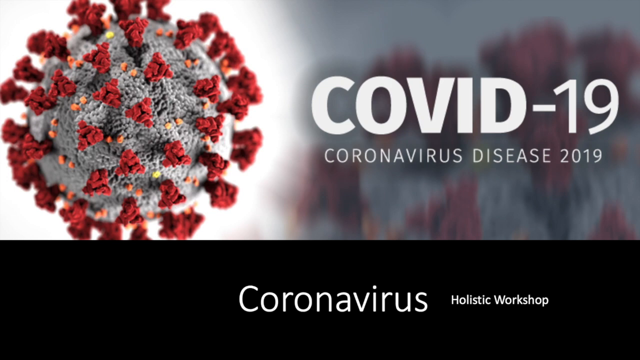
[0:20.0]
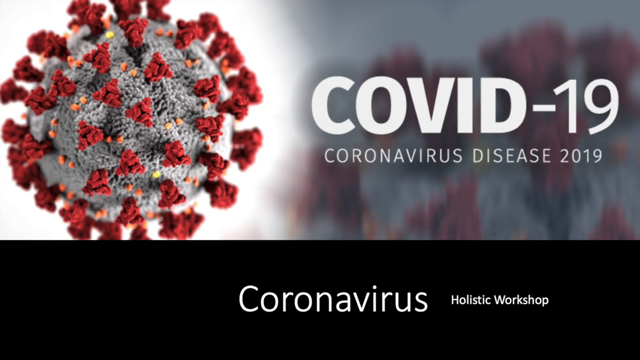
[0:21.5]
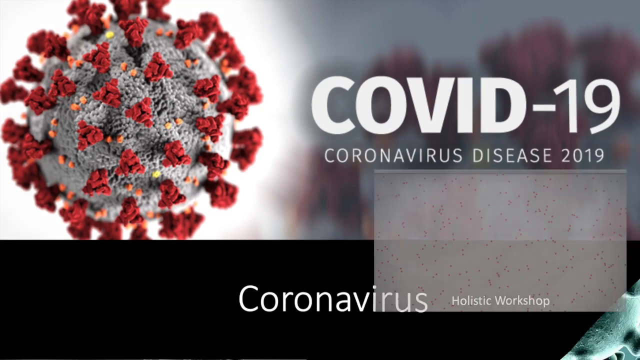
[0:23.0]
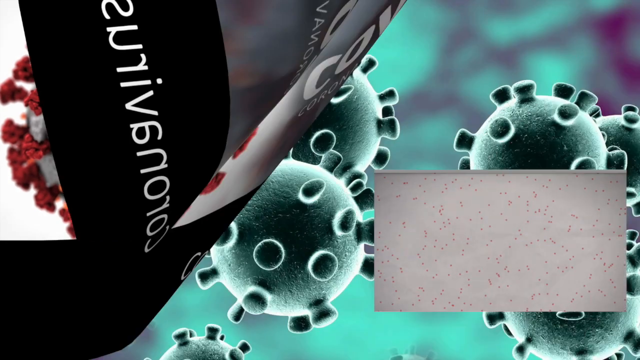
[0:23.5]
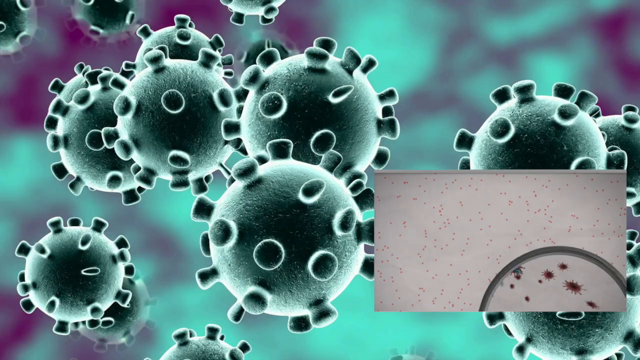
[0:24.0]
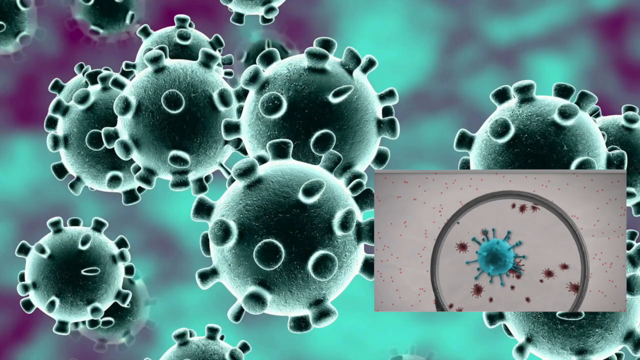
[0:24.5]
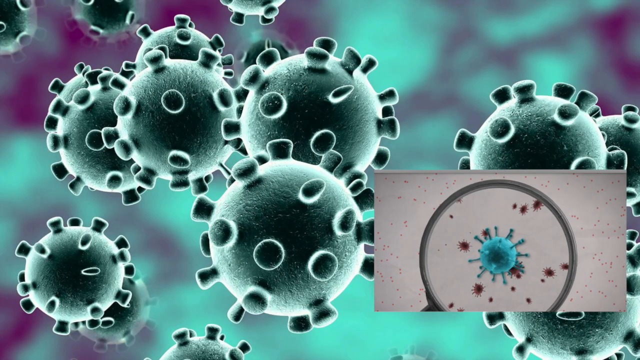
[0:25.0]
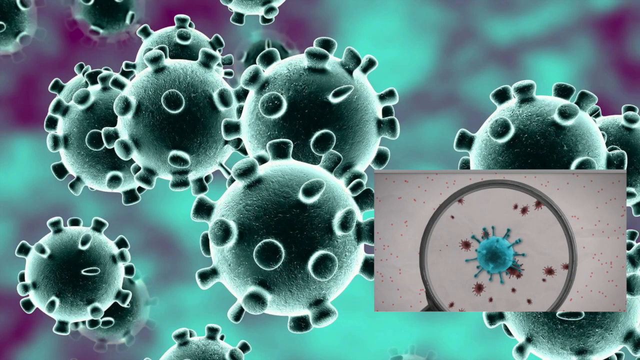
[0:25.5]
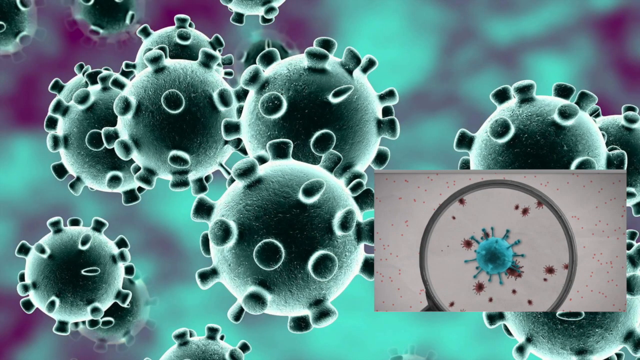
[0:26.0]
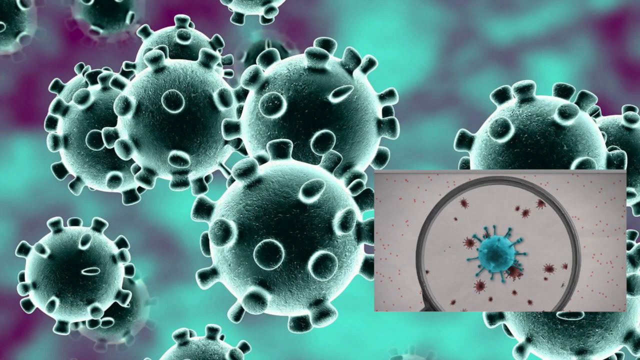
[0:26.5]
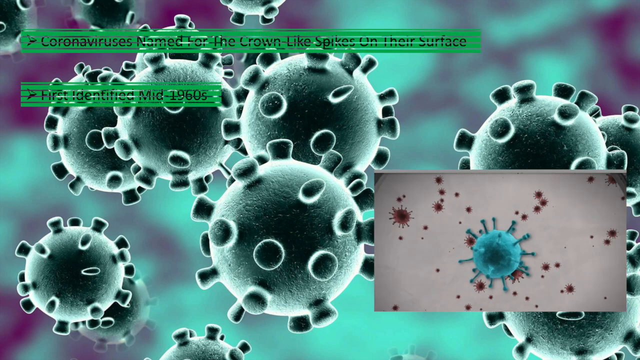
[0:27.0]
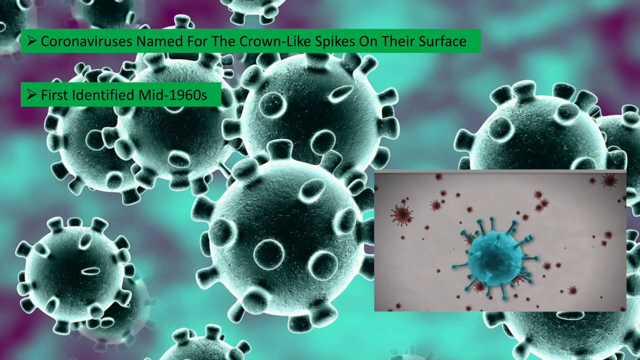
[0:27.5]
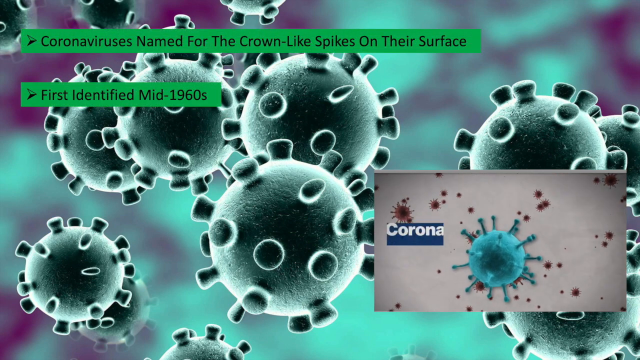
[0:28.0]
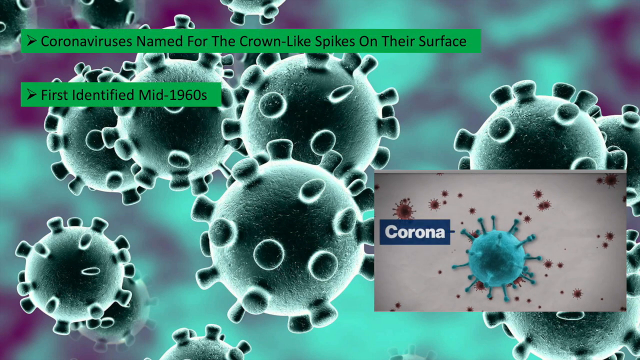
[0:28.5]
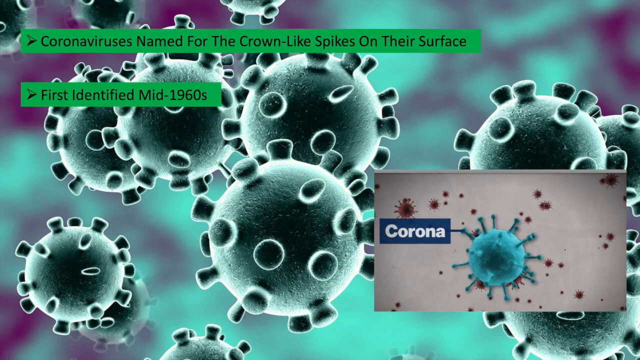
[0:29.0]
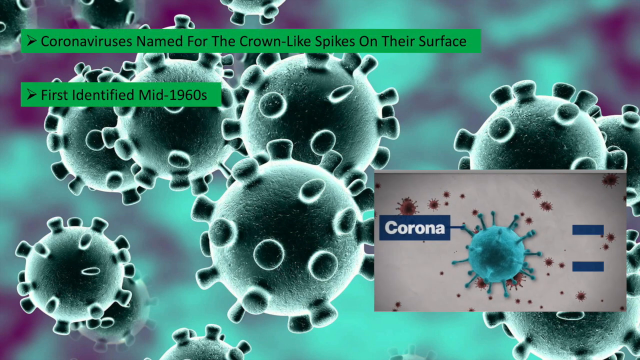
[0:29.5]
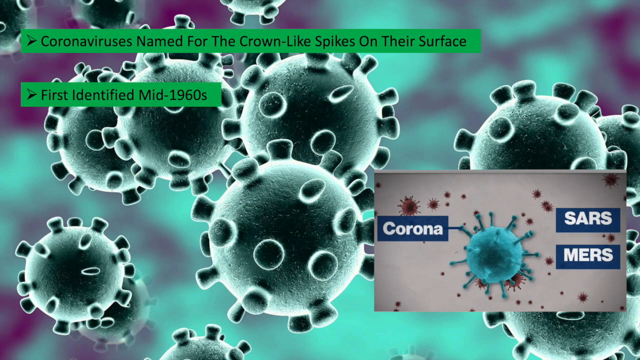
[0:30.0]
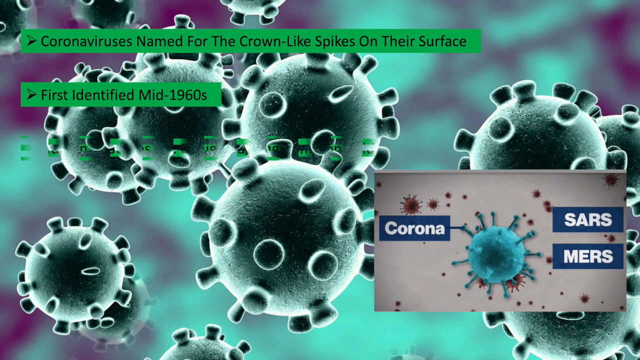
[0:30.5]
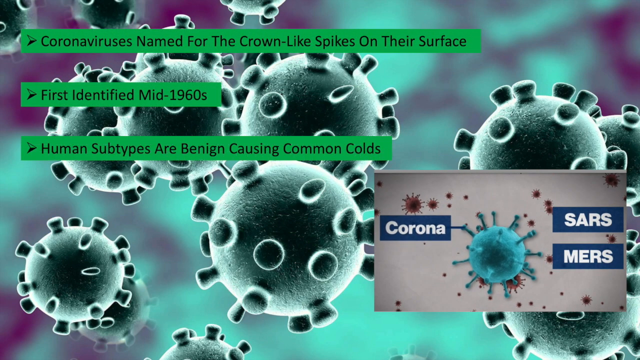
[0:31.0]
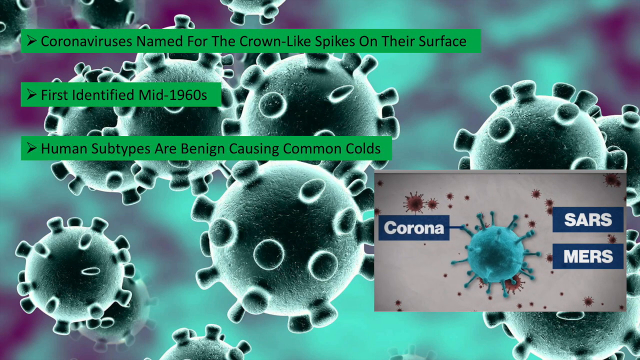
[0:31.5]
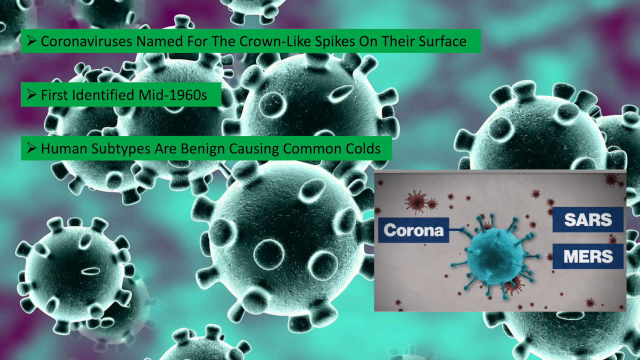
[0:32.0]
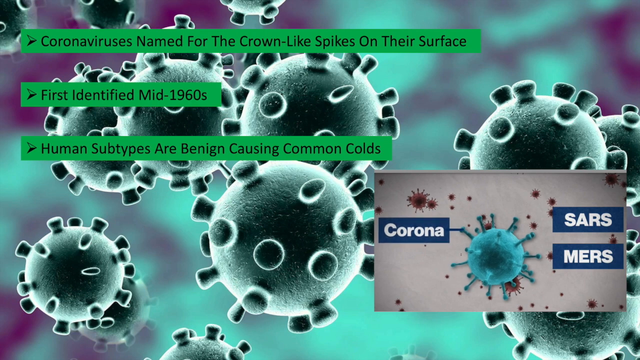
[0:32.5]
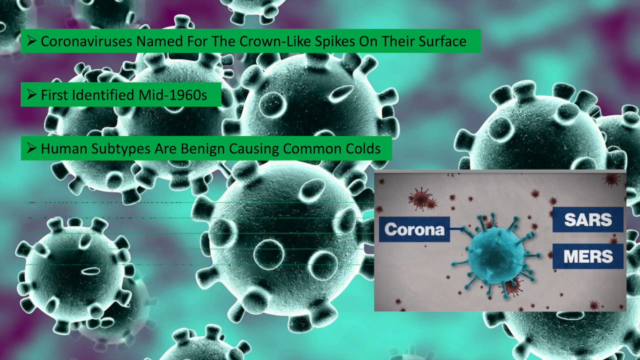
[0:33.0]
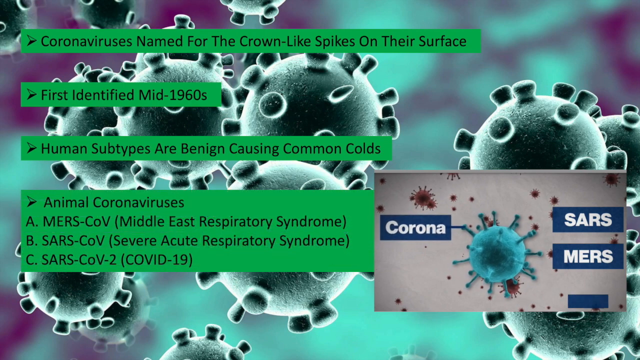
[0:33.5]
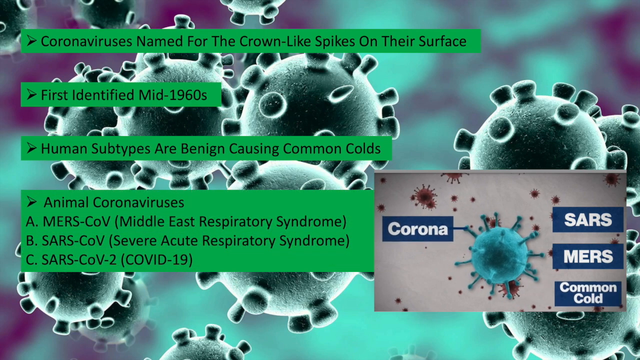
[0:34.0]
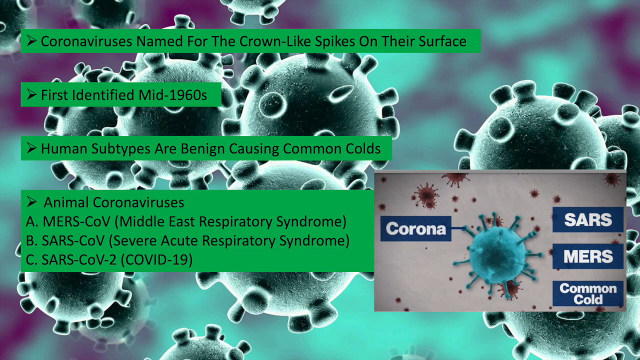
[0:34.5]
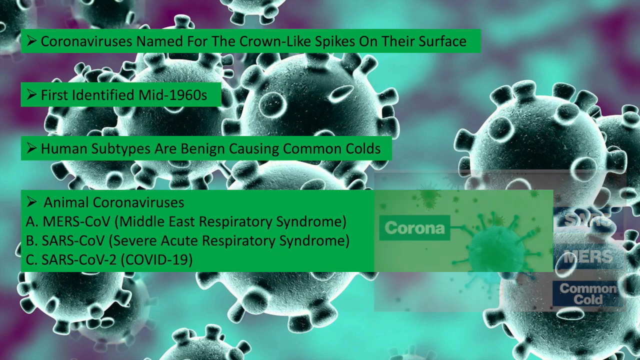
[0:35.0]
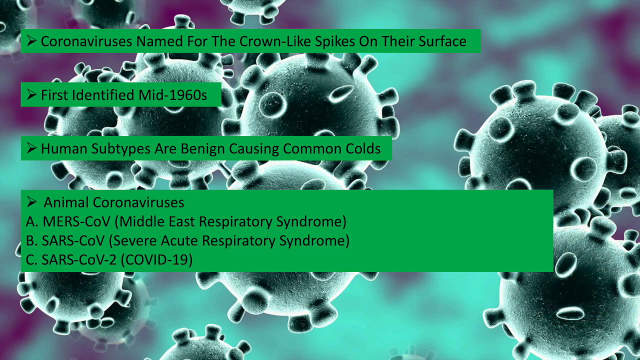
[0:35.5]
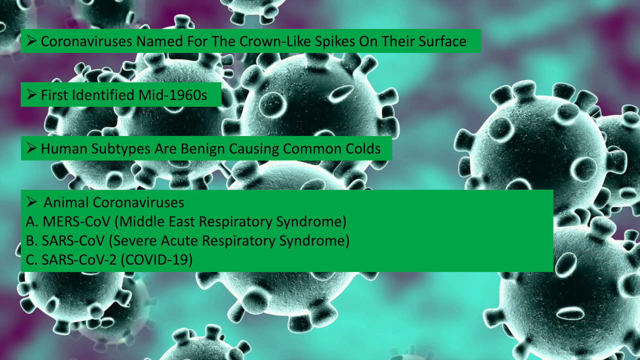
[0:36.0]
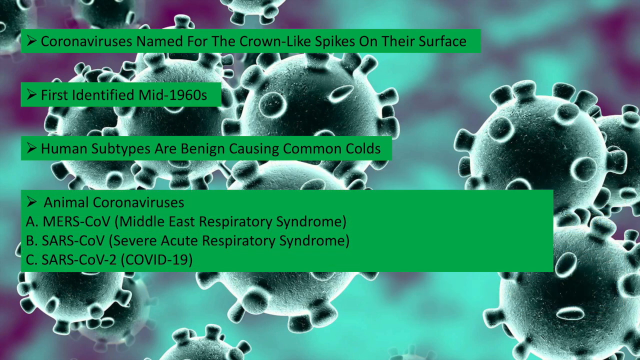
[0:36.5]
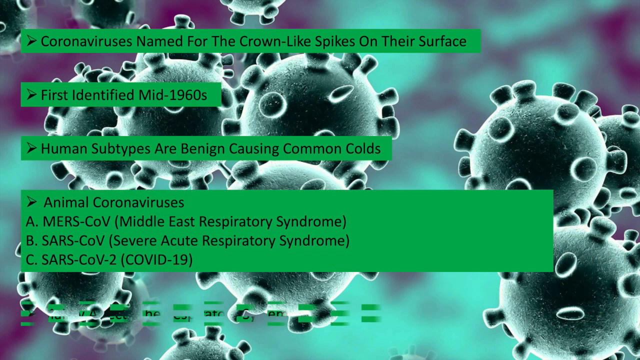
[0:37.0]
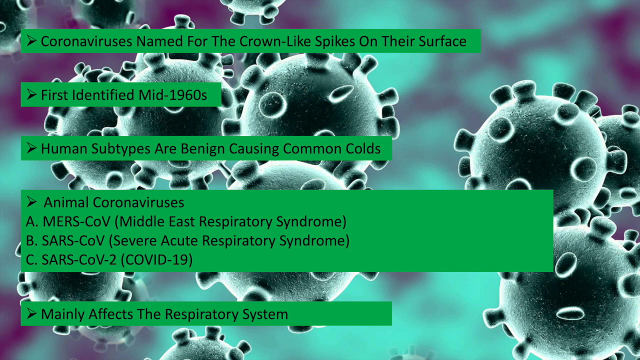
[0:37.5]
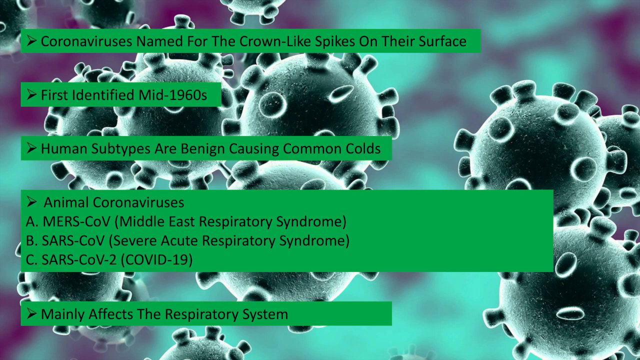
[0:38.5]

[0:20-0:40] The title also includes science, exercise, and nutrition. A still picture shows the classic COVID-19 spiky ball, with red spikes implanted all around it. Off to the right, in bold print, are the words "COVID-19" and underneath them "coronavirus disease 2019". Together, the virus image and this text take up about two-thirds of the screen. The bottom third of the screen is a totally black background with the word "coronavirus" in large print in the middle and, to its right in much smaller print, "holistic workshop". Behind the virus and the lettering is a blurry background picture showing what looks like either bloomed flowers or other versions of the COVID-19 virus seen on the left-hand side.